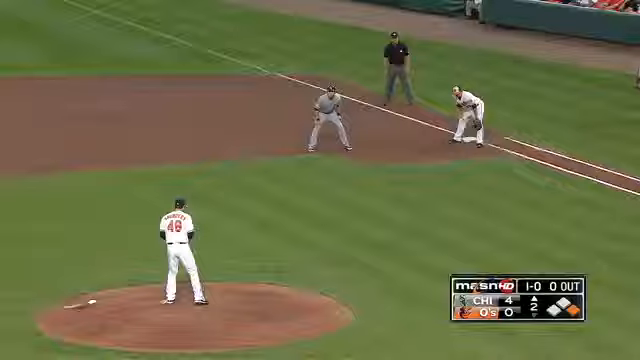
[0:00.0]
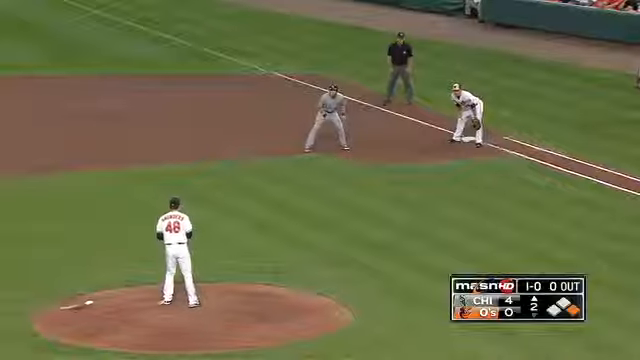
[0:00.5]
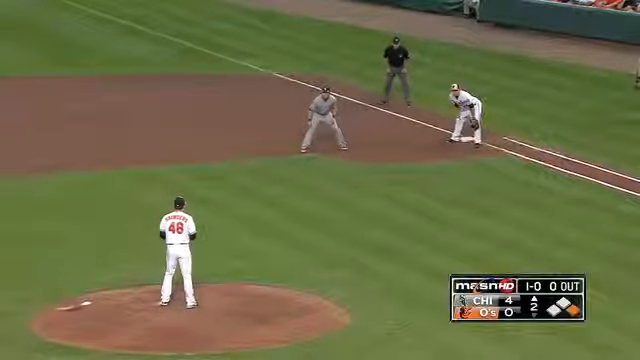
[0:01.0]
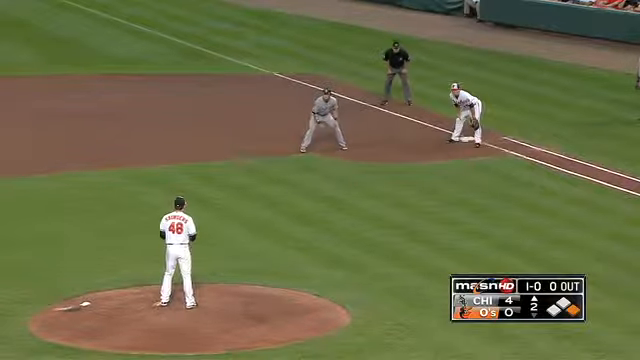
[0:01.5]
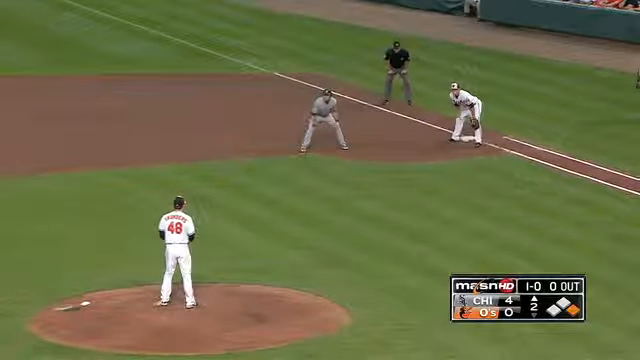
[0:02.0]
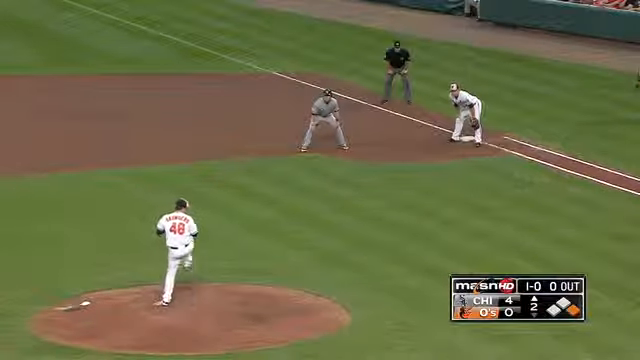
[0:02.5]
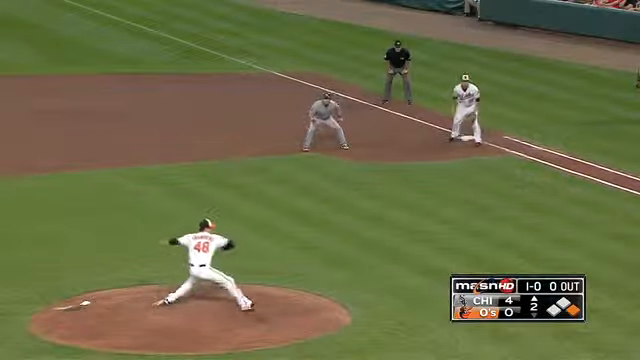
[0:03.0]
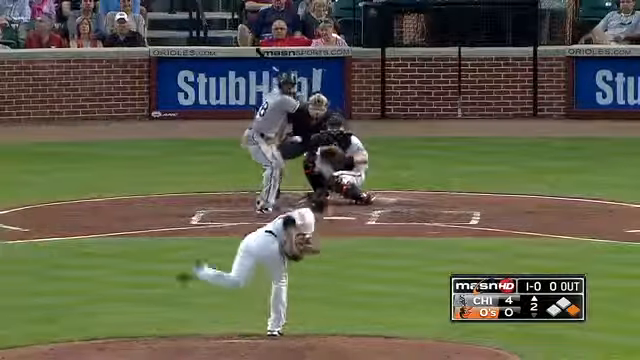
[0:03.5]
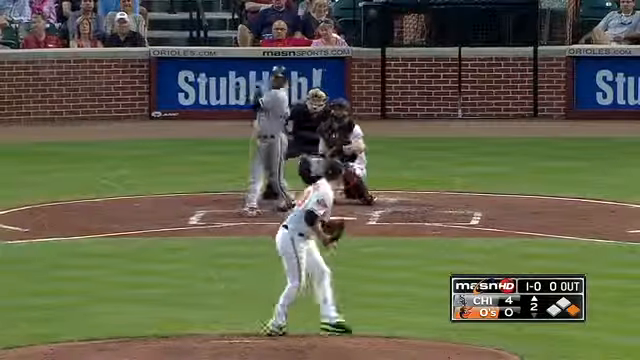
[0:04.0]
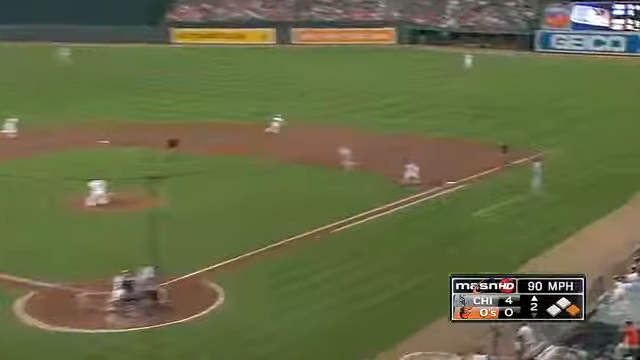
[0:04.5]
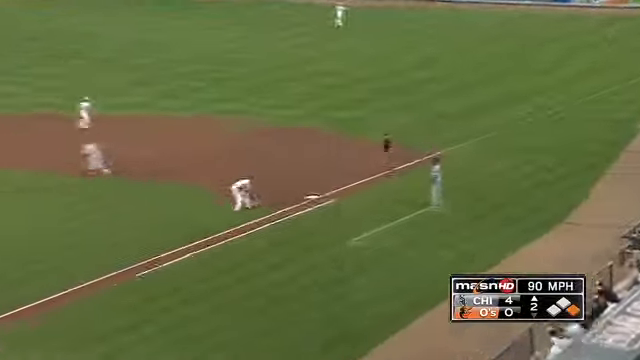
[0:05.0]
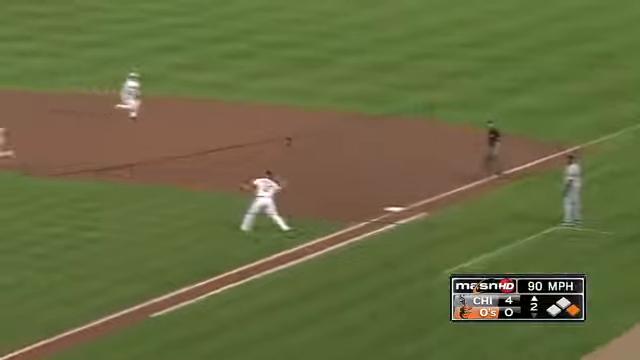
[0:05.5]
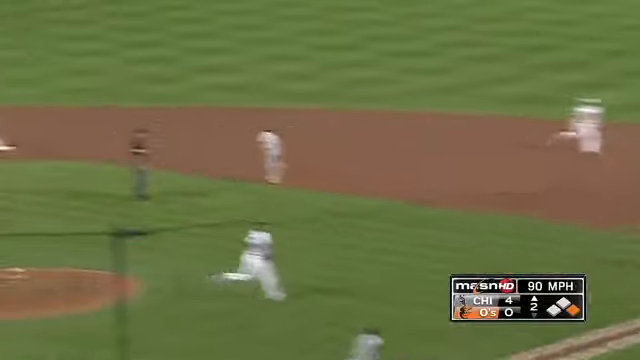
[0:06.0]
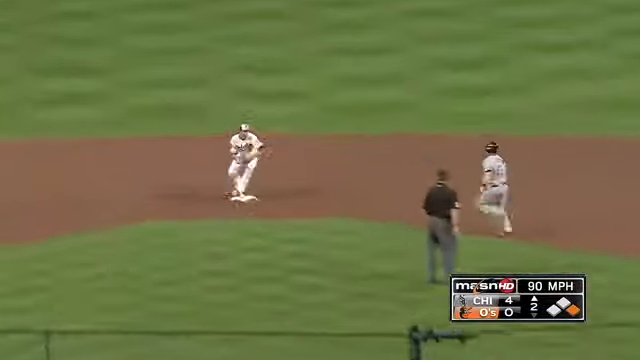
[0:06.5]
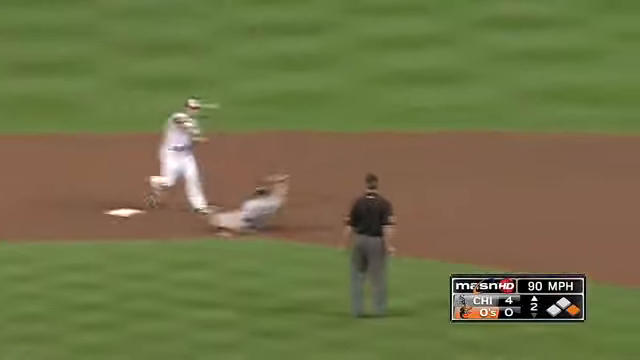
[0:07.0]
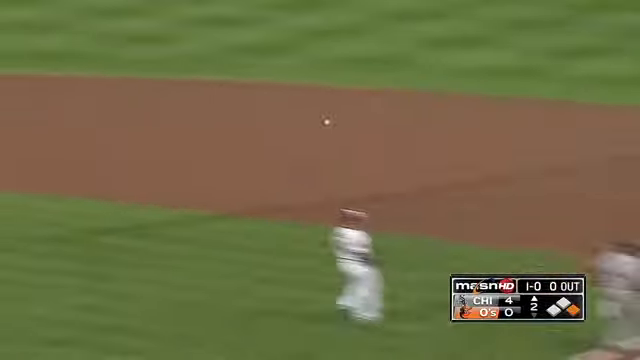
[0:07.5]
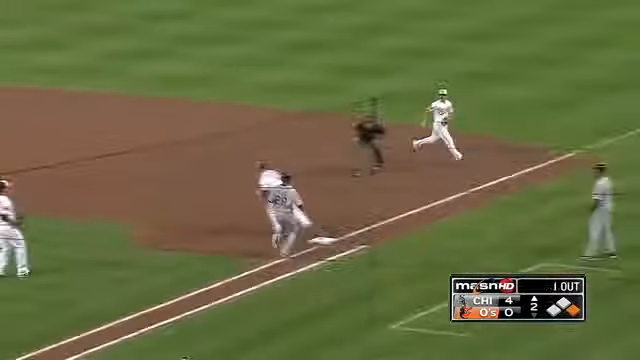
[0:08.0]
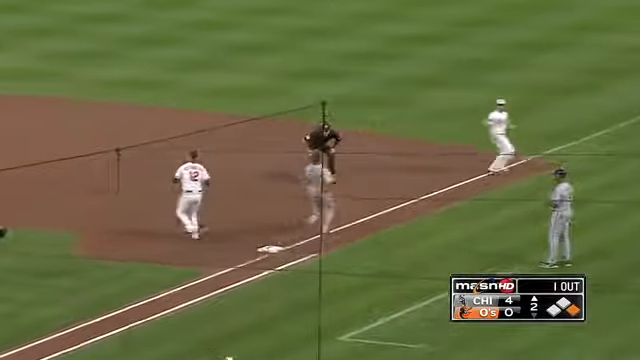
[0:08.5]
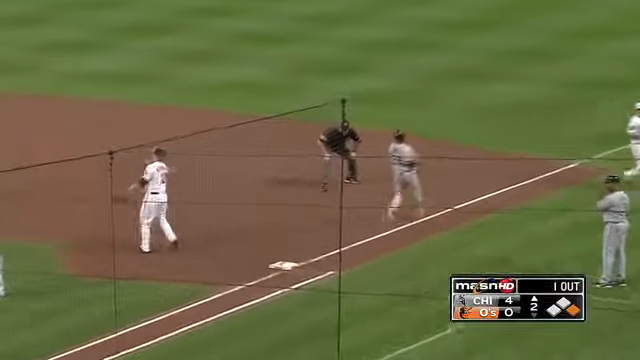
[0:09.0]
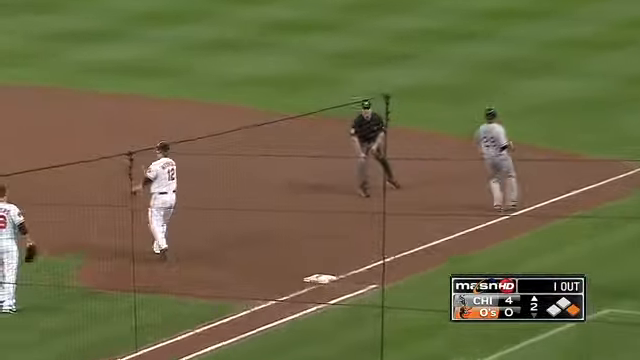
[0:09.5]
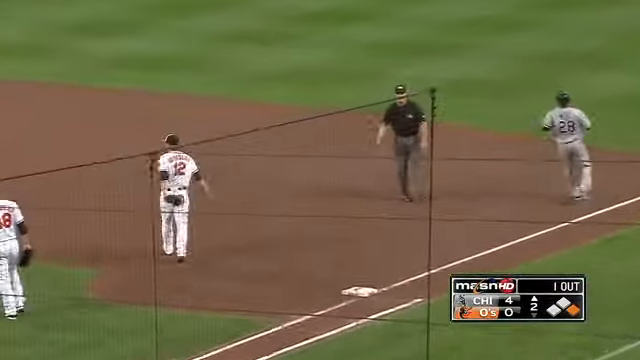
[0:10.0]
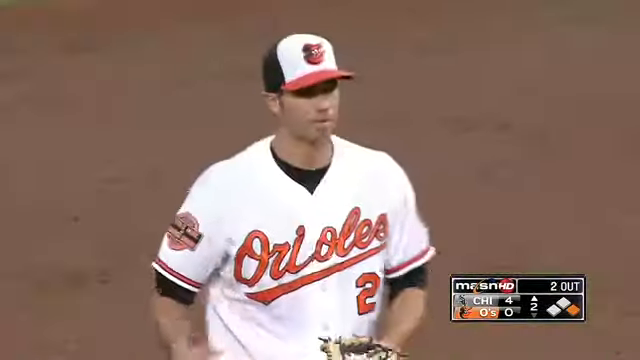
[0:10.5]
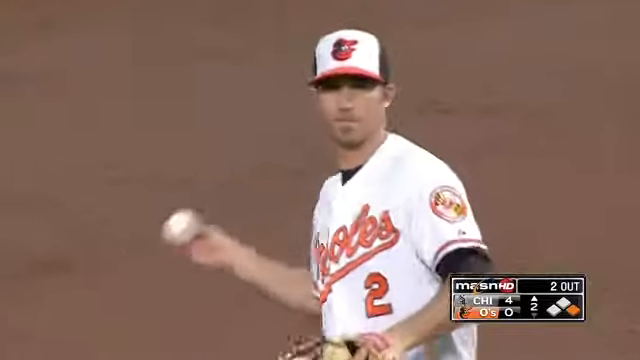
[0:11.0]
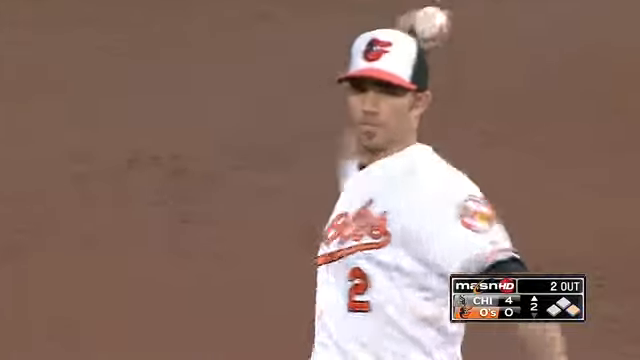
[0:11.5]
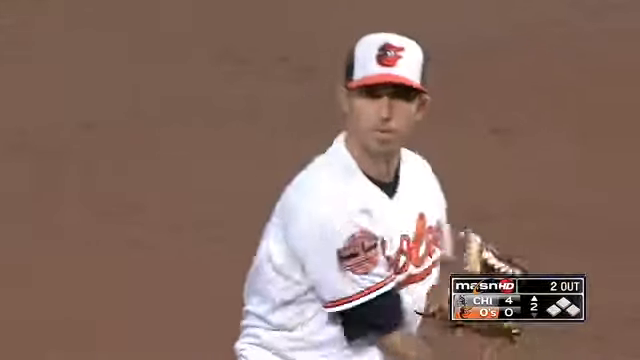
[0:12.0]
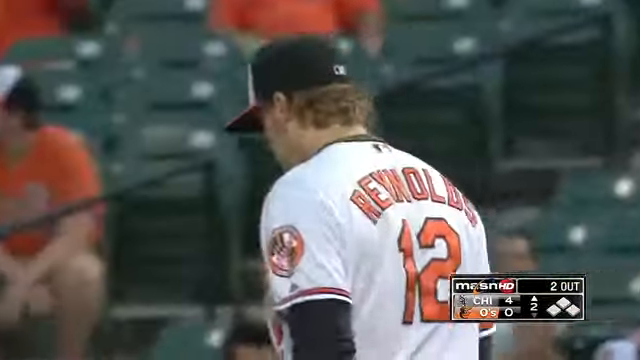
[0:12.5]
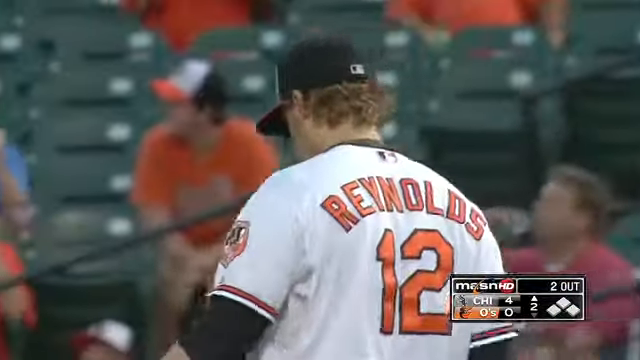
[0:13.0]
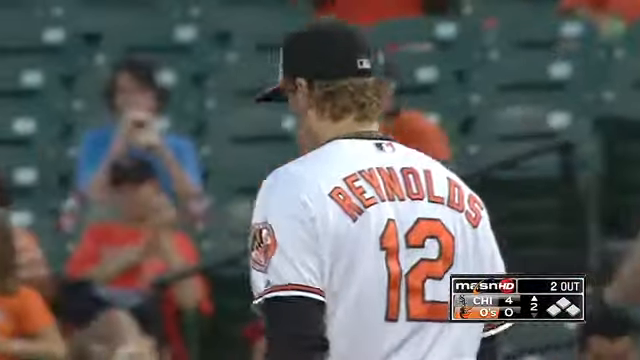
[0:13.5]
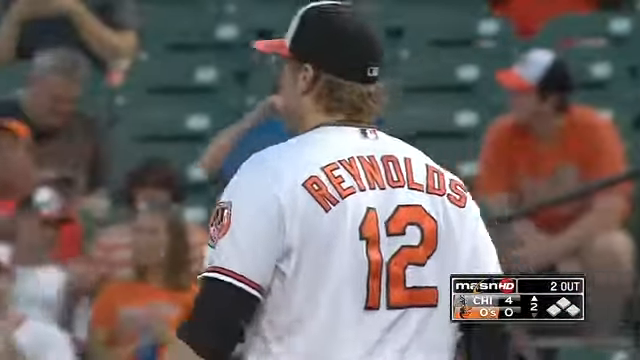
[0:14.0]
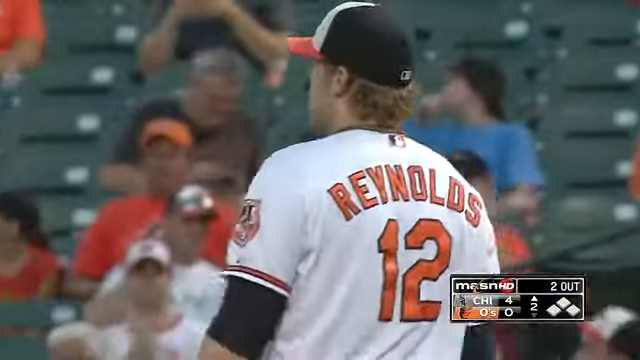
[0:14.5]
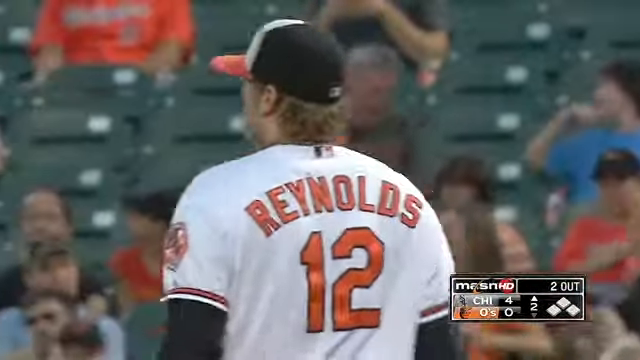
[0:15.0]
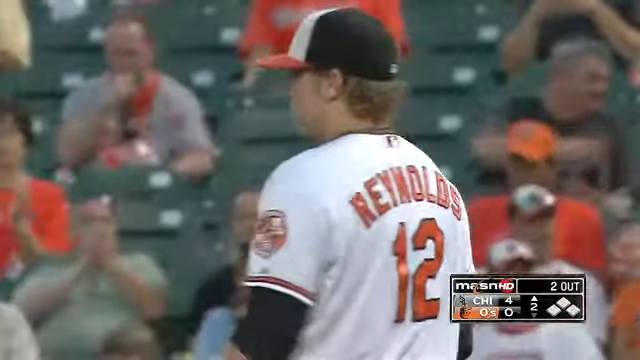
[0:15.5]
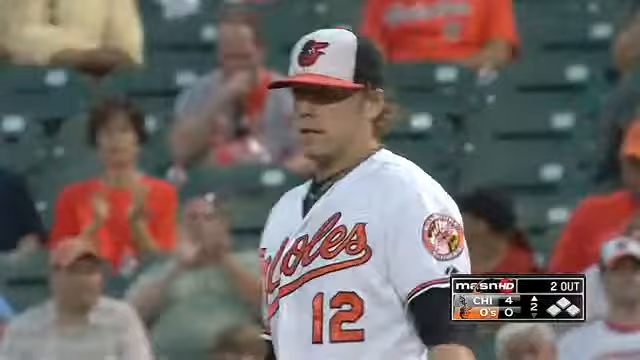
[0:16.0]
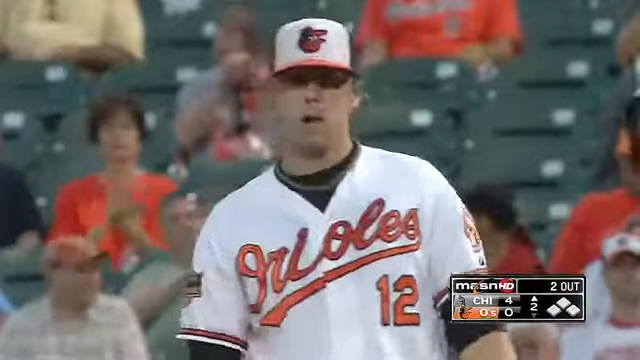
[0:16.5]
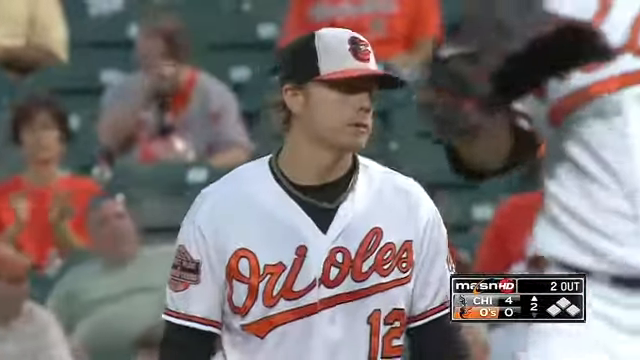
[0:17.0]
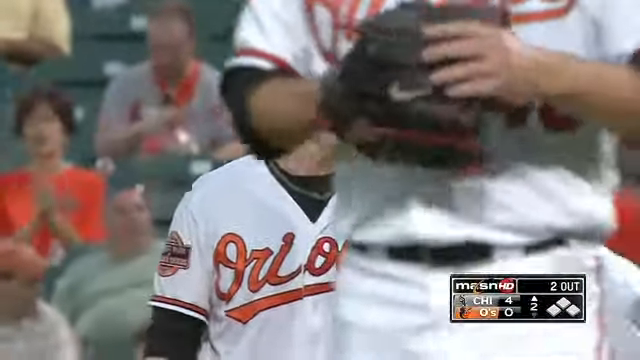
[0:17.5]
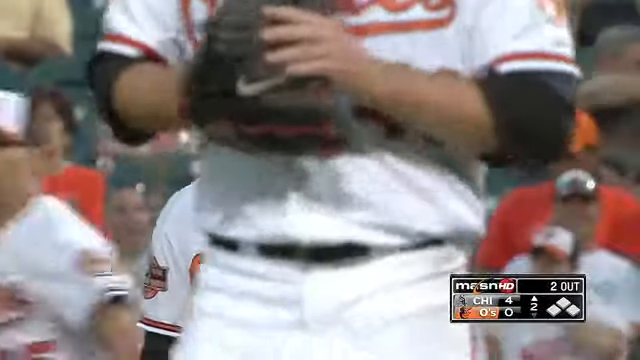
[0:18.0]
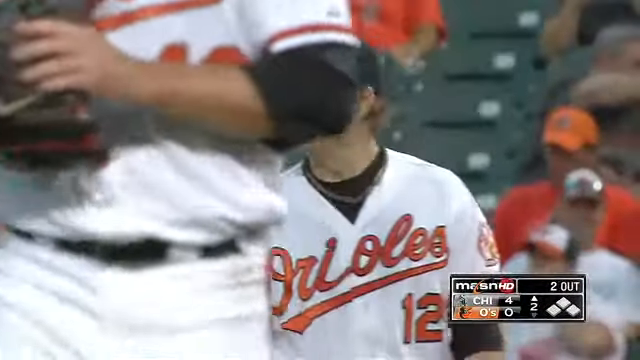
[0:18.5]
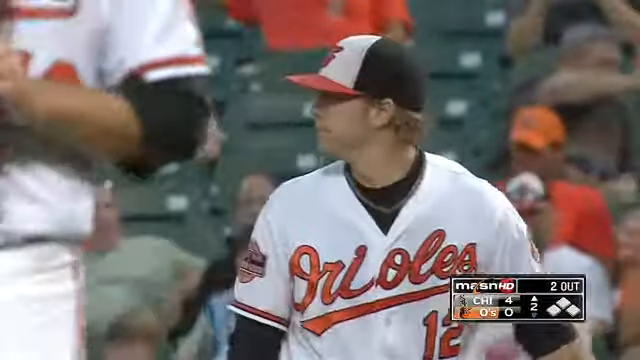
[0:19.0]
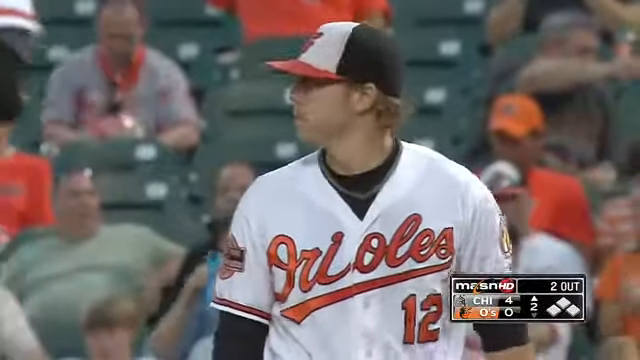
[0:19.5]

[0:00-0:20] A baseball game is under way. A man in the middle of the baseball pitch holds the ball in his hand; he has the number 46 on his back. A man is on first base, and next to him are two other men, one wearing grey and one wearing black; it is unclear who they are. The man in the centre of the pitch throws the ball towards the hitter, who wears grey and a black helmet. The hitter whacks the ball back over the thrower's head, but it only goes to the individual on first base, who catches it and immediately throws it to second base. The player at second base immediately throws the ball back to the man on first base, who then throws it back again to the person on second base. The video then zooms to one of the individuals on the field, who has the number two and wears a white shirt. It then moves to another individual with "Reynolds" and the number 12 in orange on the back of his shirt.